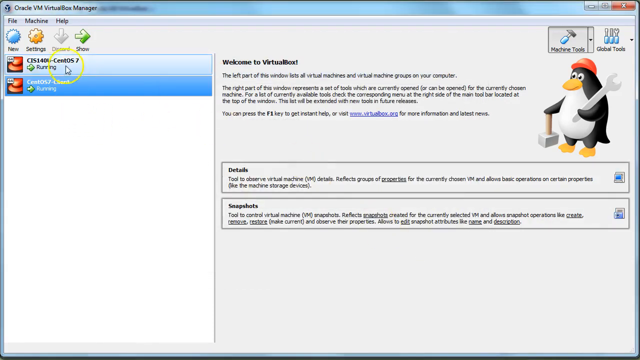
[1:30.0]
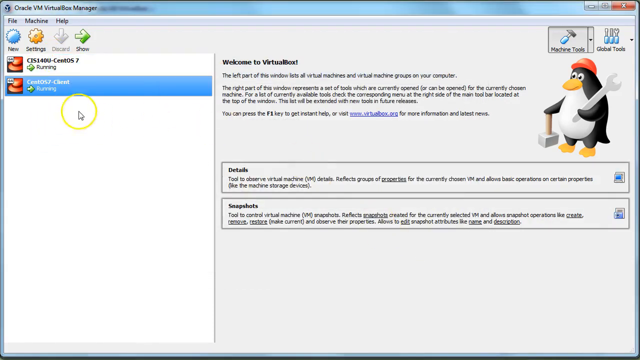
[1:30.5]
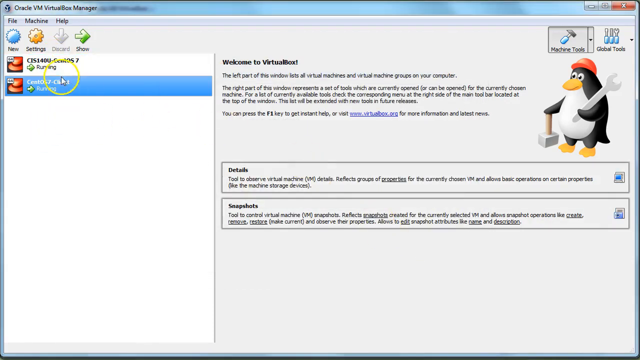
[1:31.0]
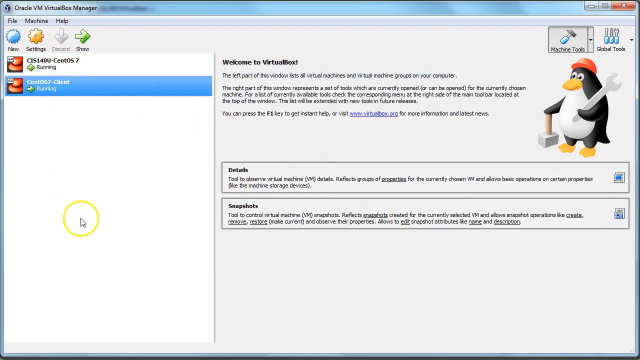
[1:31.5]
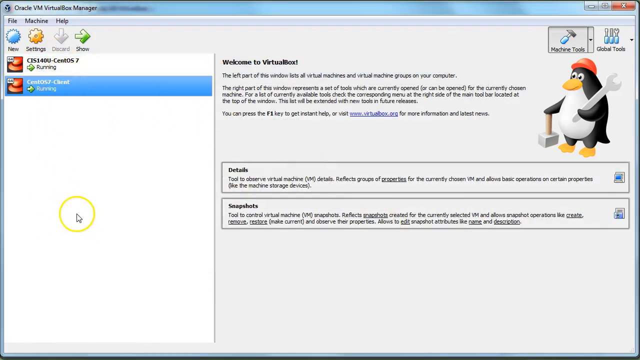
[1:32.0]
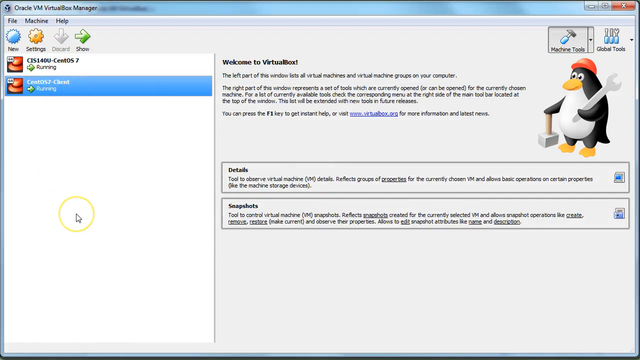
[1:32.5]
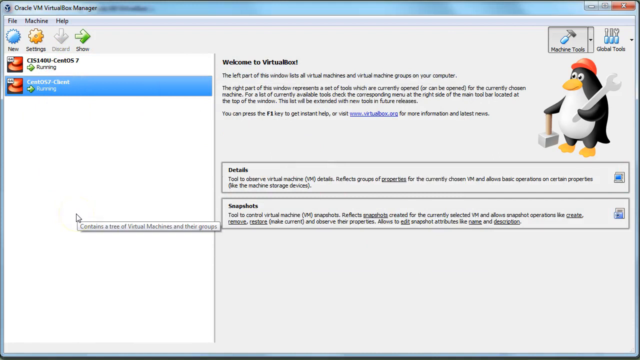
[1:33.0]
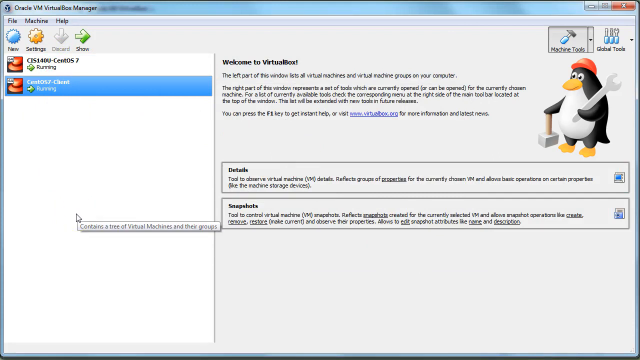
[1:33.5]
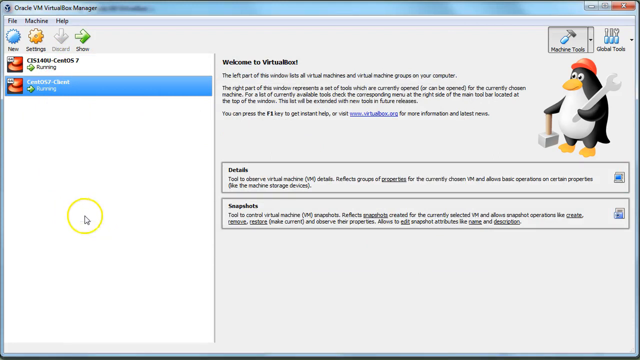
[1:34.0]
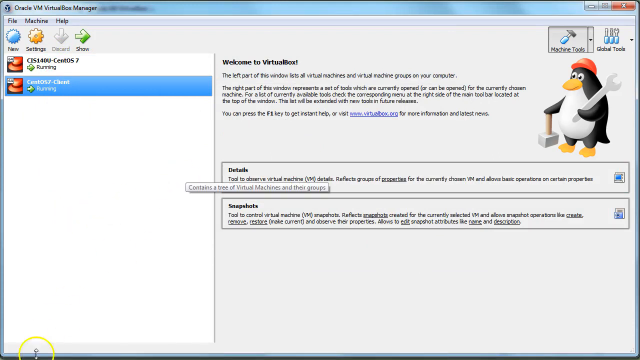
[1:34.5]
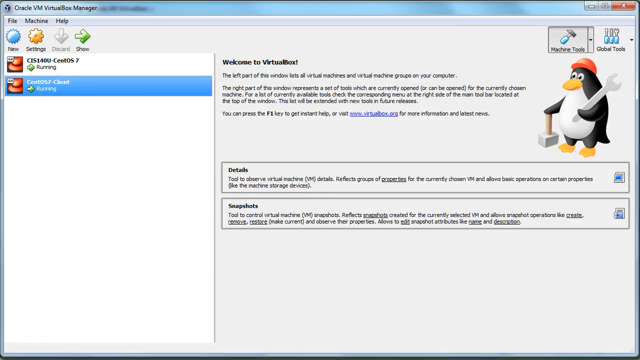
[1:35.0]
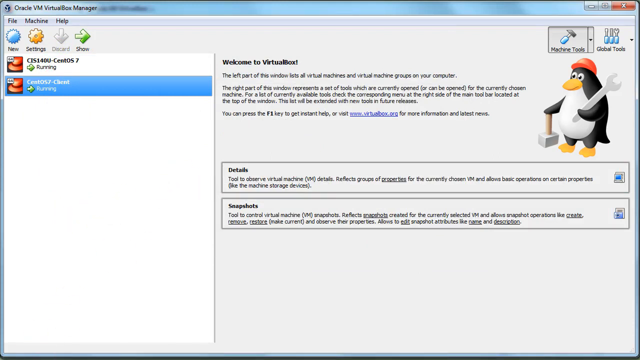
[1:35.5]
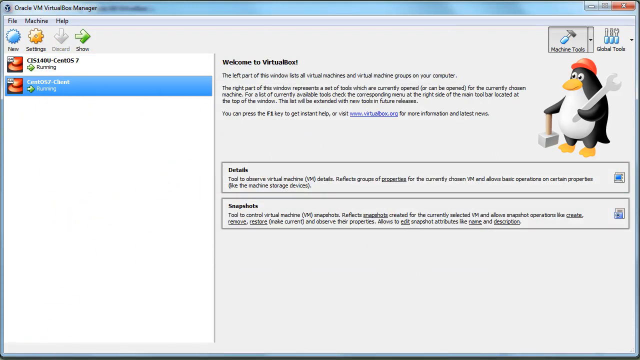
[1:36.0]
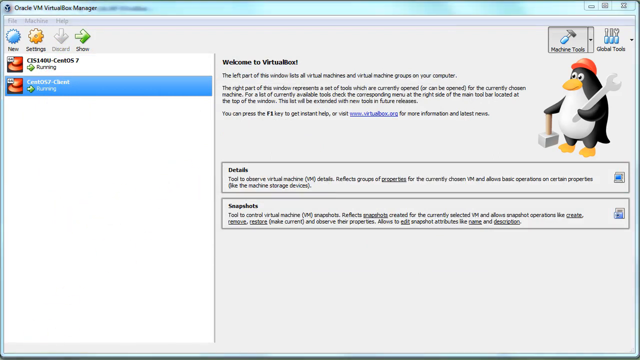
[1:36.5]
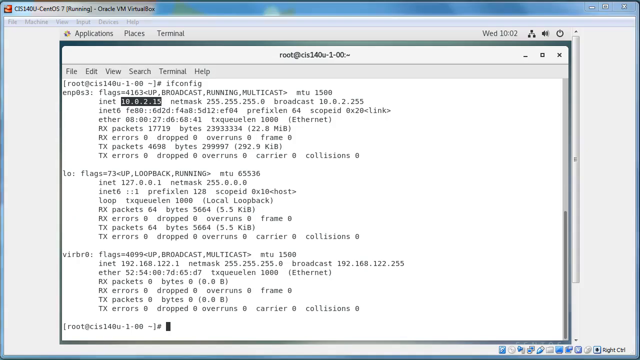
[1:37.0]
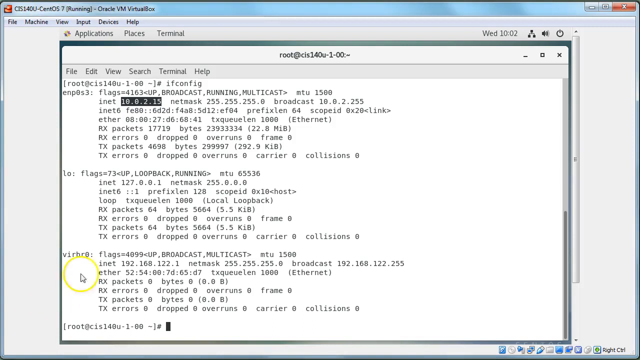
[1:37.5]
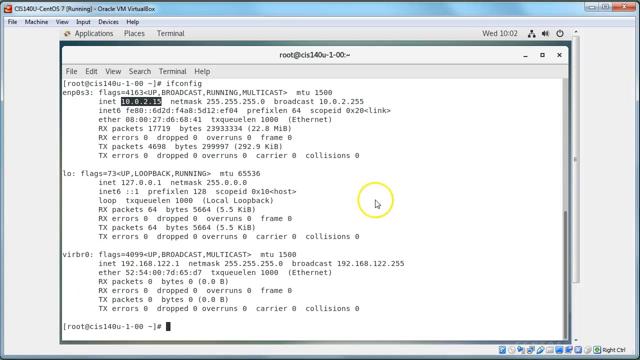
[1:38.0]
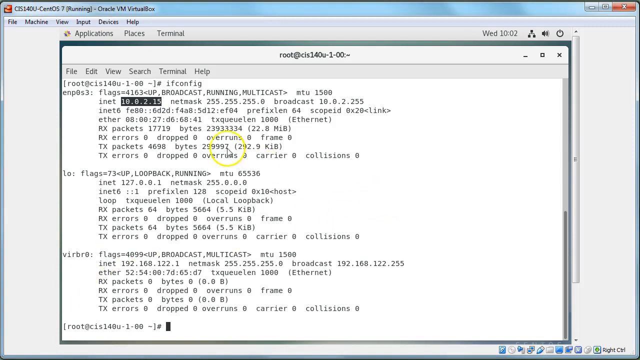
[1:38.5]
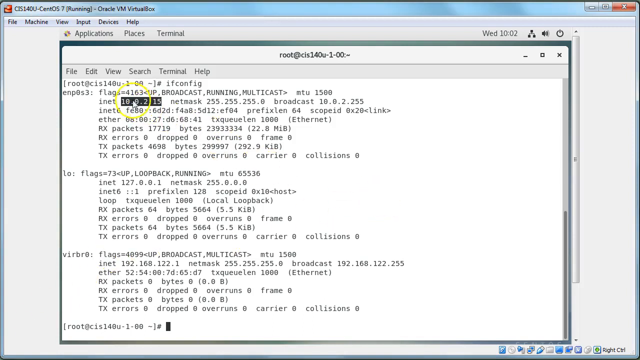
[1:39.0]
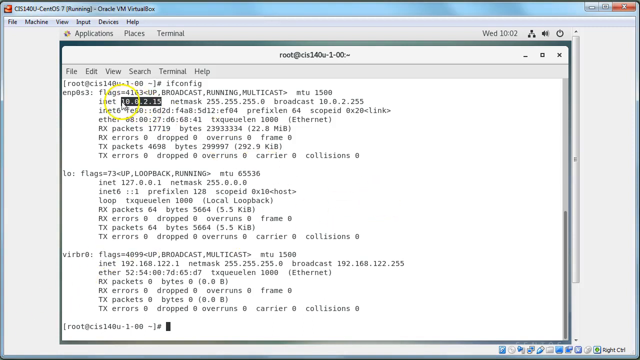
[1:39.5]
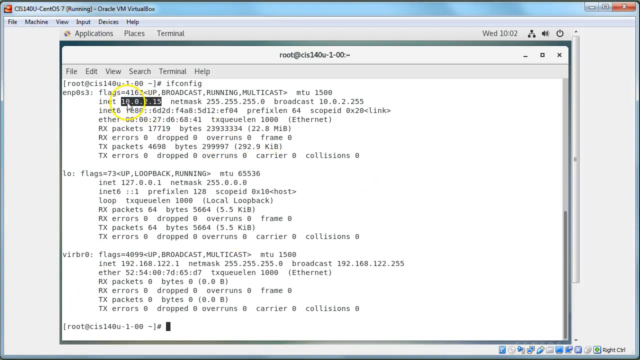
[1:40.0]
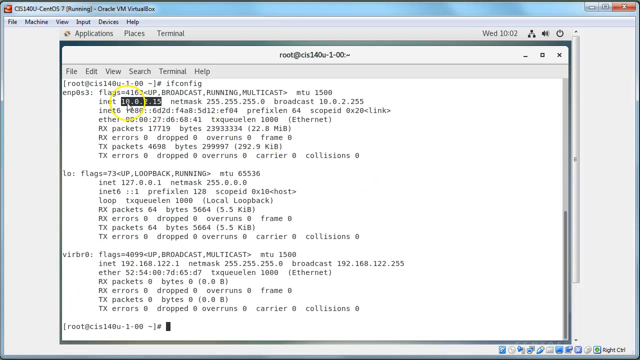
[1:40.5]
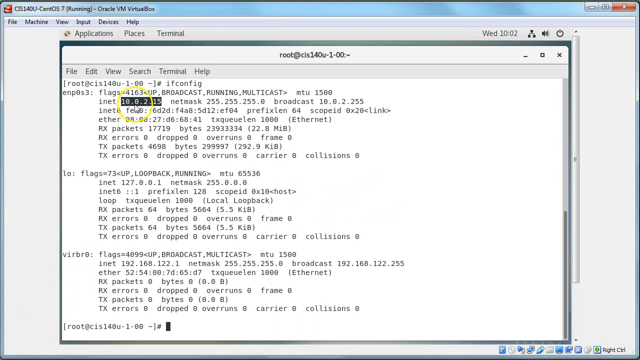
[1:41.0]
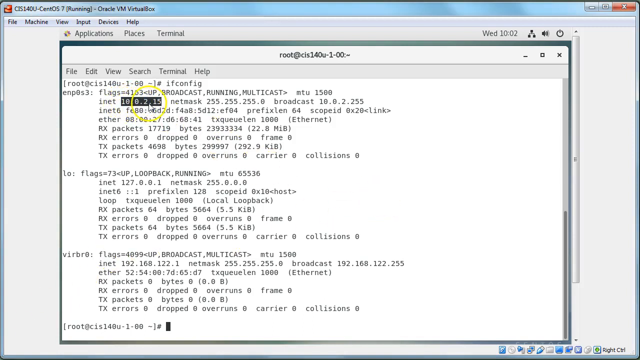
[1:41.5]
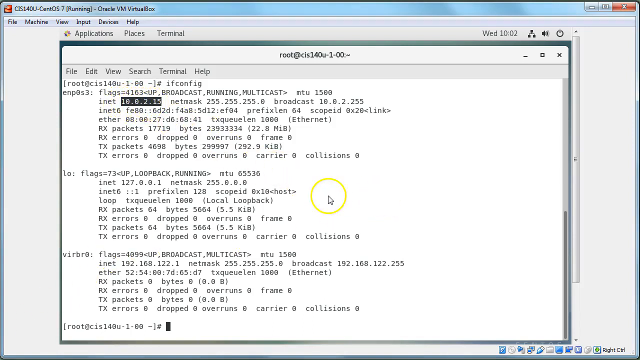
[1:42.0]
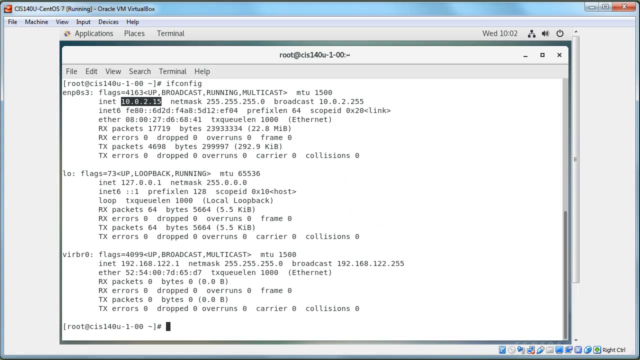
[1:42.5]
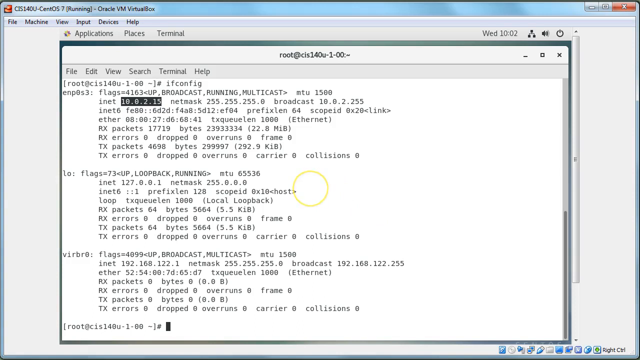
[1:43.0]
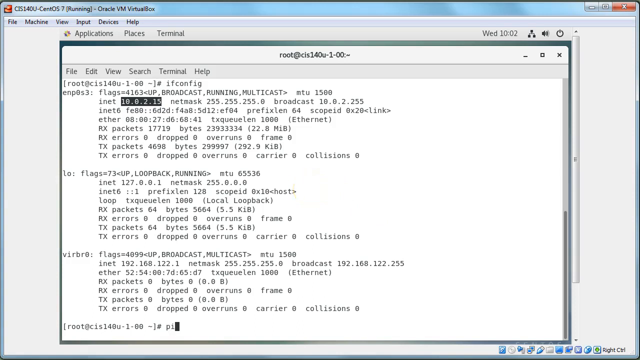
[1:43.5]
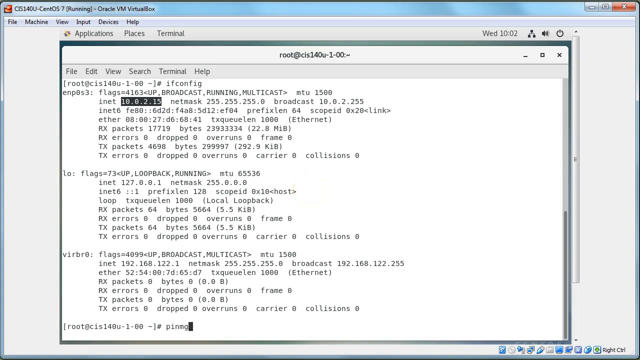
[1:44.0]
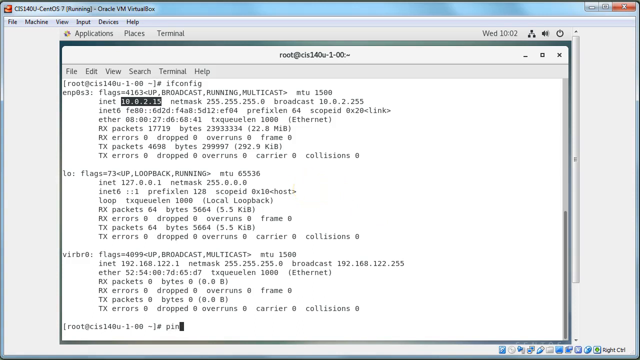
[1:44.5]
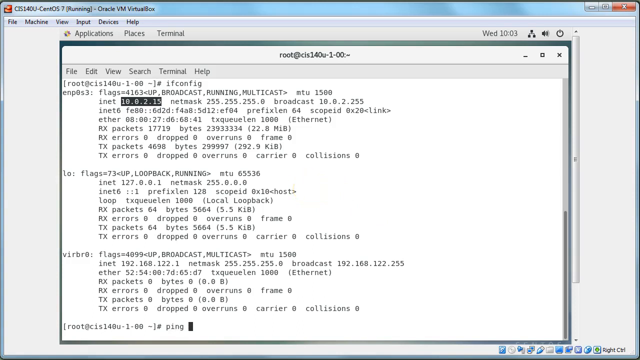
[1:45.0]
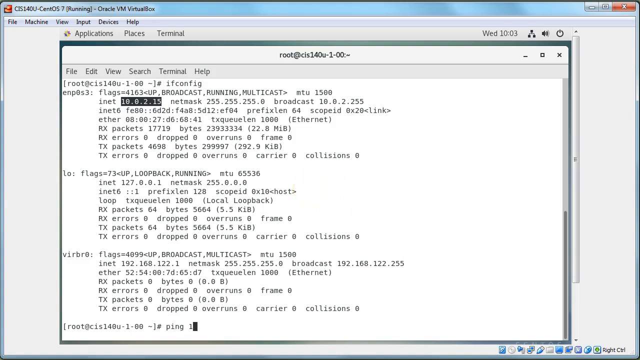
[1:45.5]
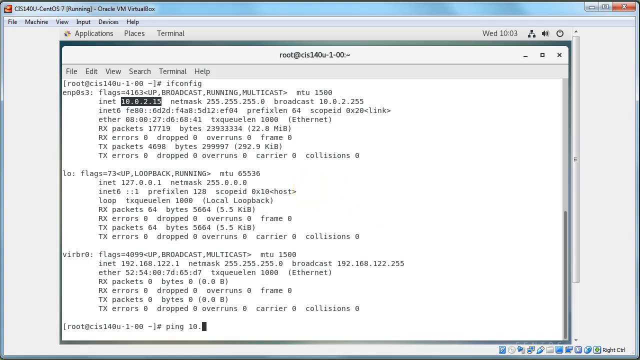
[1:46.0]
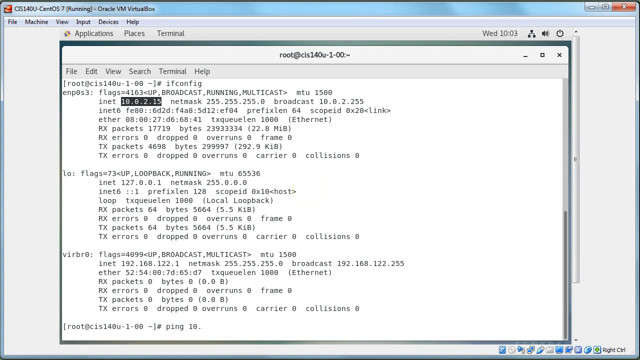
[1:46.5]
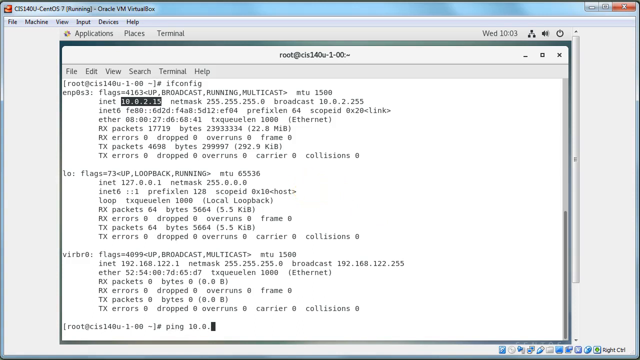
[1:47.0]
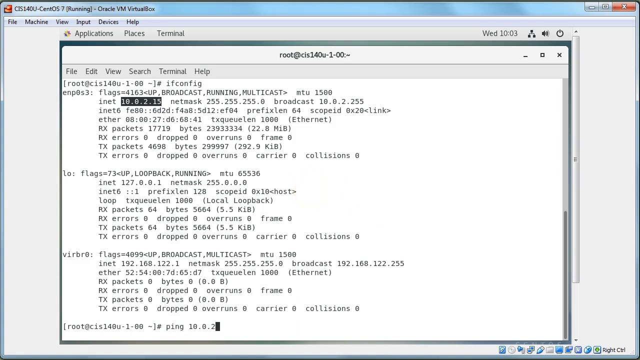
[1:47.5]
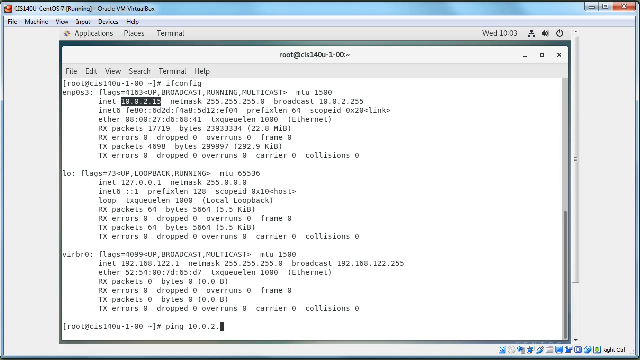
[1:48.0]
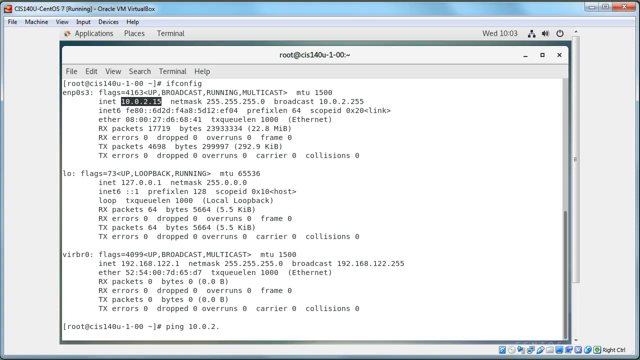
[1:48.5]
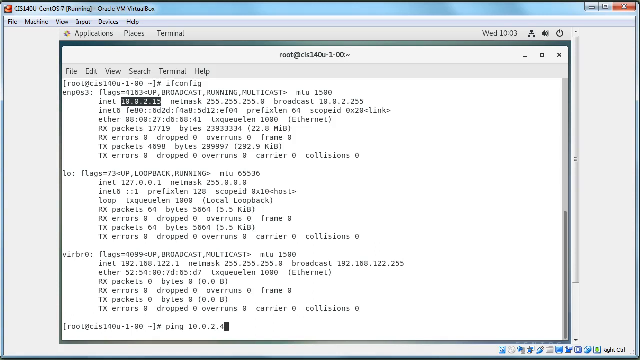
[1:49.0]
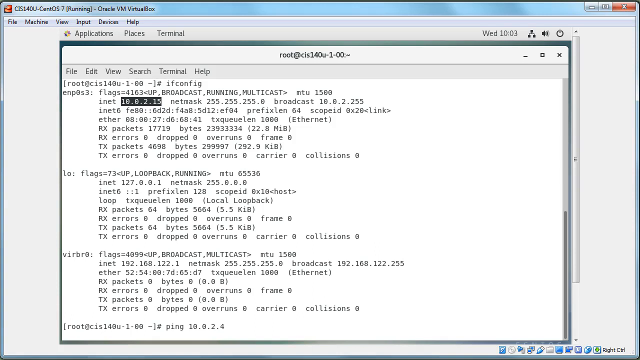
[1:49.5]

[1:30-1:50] The main front page of the Oracle VM VirtualBox manager is shown in the light theme with a white background. Two running VMs are in the left panel, and on the right is the standard default Welcome to VirtualBox text with the penguin logo at the very right and panels for details and snapshots underneath. His mouse hovers over the two virtual machines in the left panel, then moves to the bottom left of the screen. He switches windows to one of the running virtual machines, showing the terminal window in the middle of the screen with the commands he has run, including ifconfig with its output in three long paragraphs. He highlights the third line, which says "init 10.0.2.15", and it is highlighted in black text. At the very bottom he types another command, ping 10.0.2.4, which displays the bytes of data from that server.